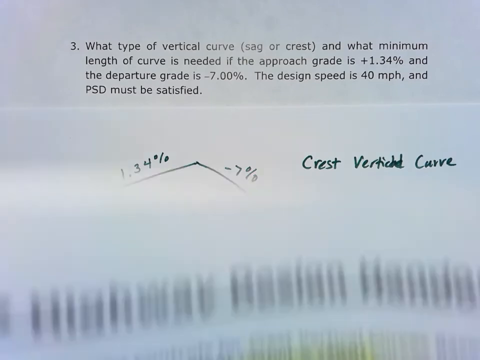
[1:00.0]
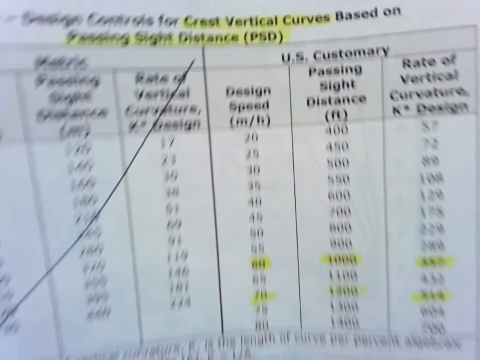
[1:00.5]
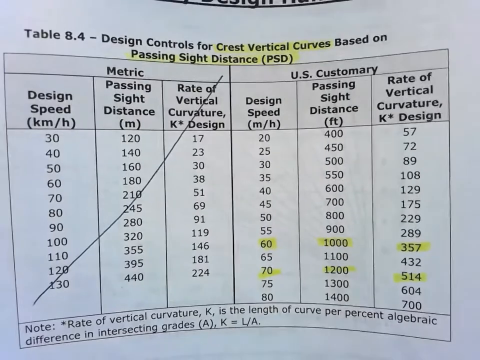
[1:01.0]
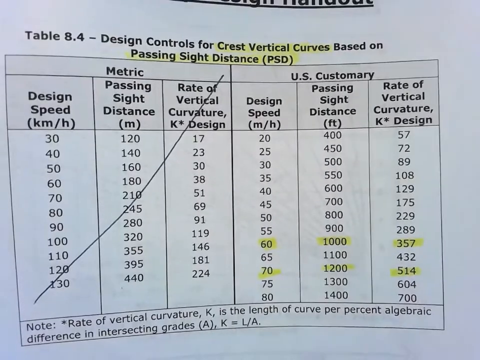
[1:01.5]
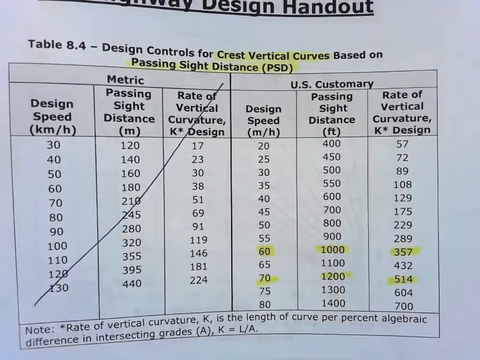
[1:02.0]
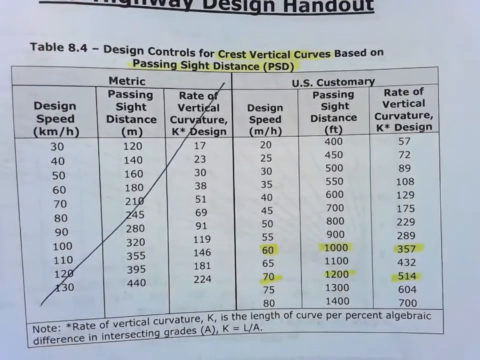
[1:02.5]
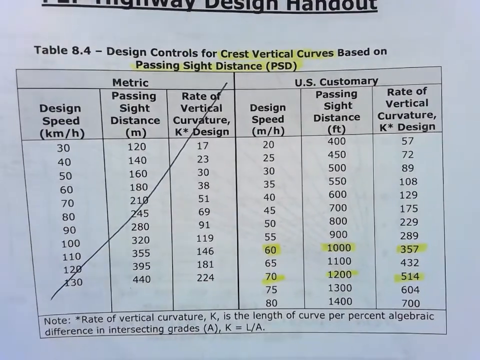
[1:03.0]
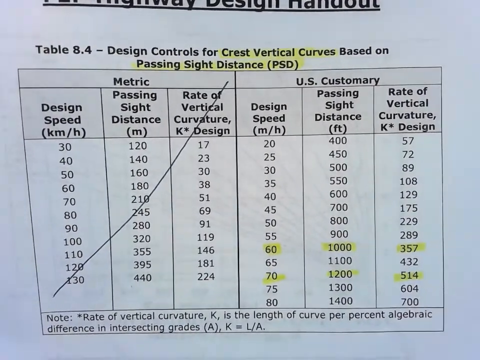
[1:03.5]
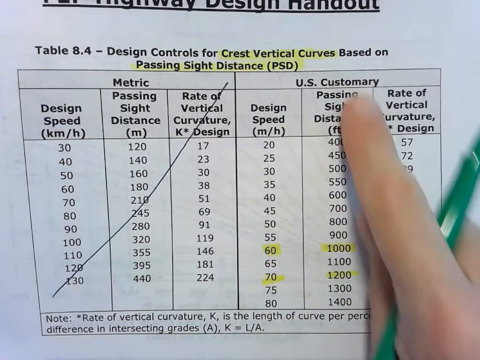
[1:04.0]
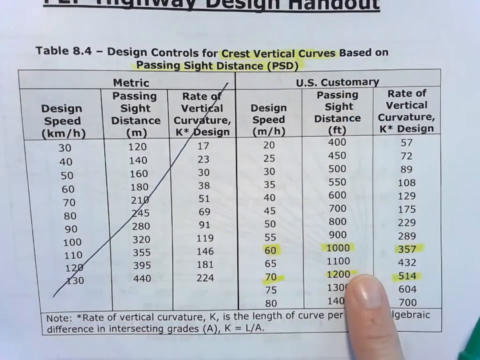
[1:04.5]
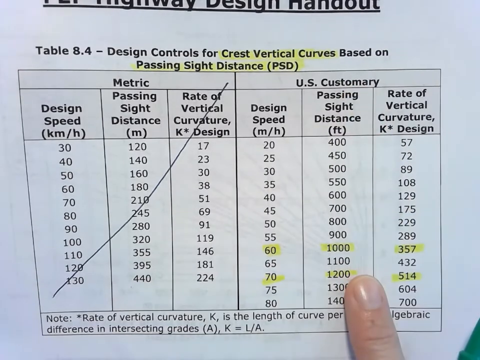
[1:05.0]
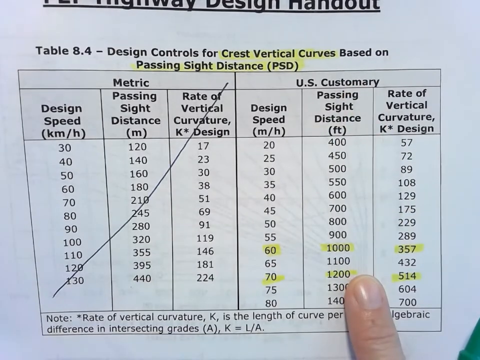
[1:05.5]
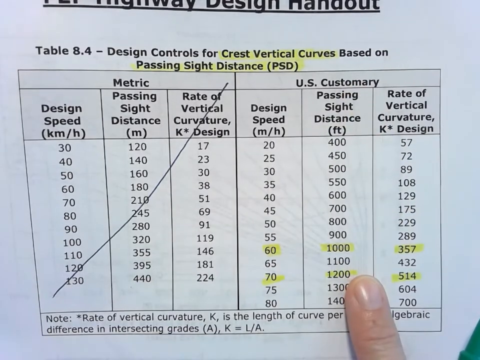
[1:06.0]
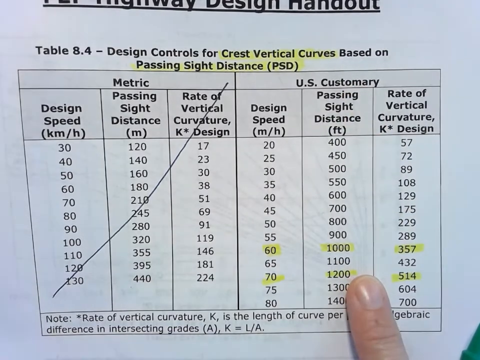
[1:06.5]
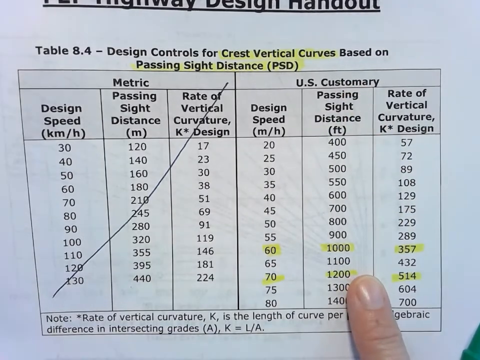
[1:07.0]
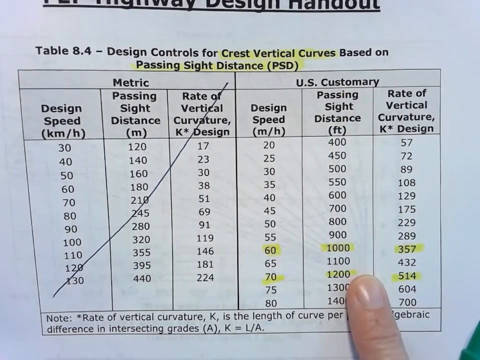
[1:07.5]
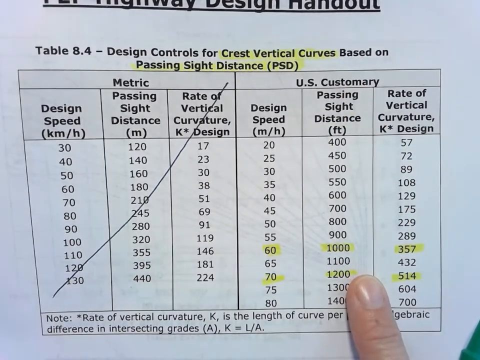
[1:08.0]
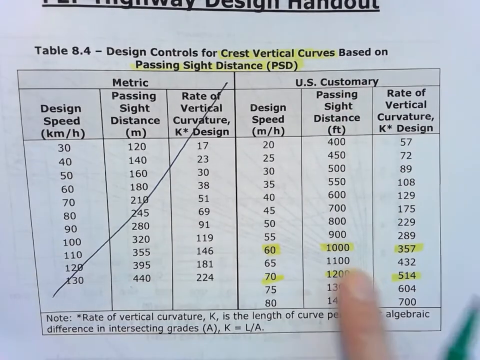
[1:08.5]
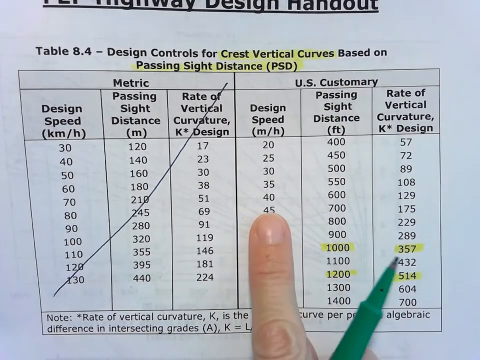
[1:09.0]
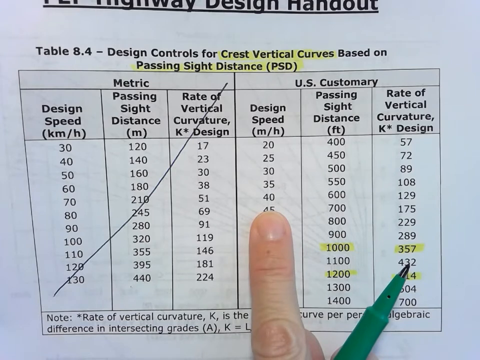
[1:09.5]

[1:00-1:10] The workings for the question are shown: two green lines, with 1.34% on the left line and -7% on the right line, joined at a vertex, and the words "Crest Vertical Curve" written to the right, all placed underneath the question at the top of the page. The video then jumps to a piece of paper with tables, where the left side of the page, headed "metric", is struck out and the right side says "US Customary". The title of the table is "Design Controls for Crest Vertical Curves Based on Passing Sight Distance, PSD"; it is a table for looking up a value to answer the question. Some values on the page are highlighted in yellow, such as the design speeds 60 and 70 and their corresponding passing sight distance and rate of vertical curvature. A person's index finger points out a number on the table.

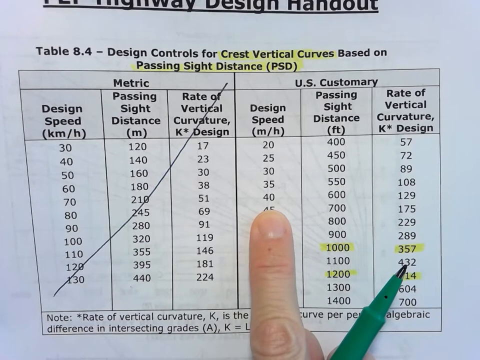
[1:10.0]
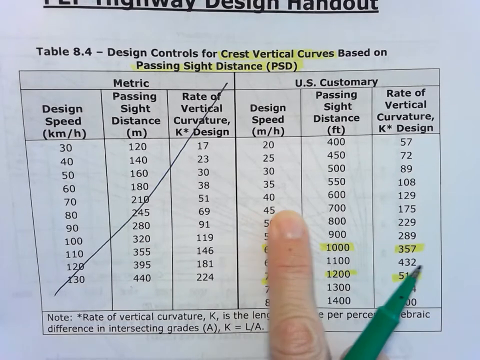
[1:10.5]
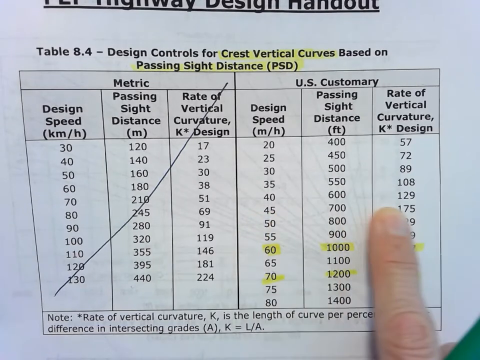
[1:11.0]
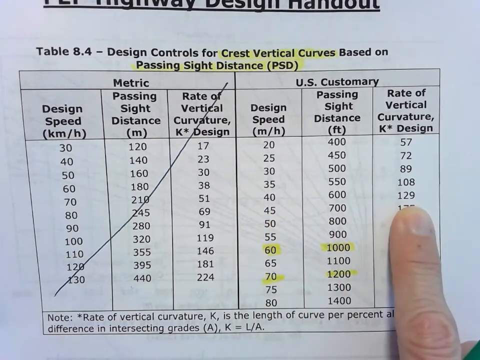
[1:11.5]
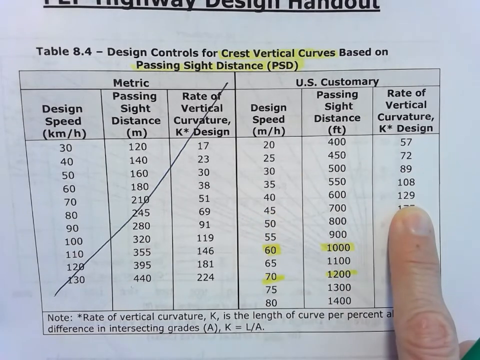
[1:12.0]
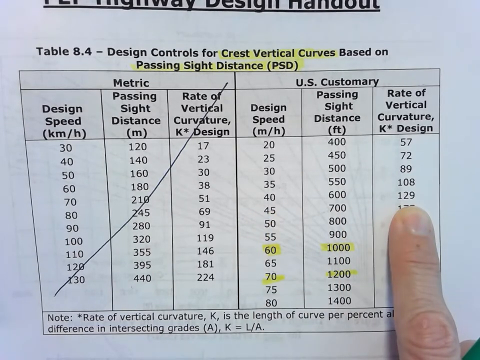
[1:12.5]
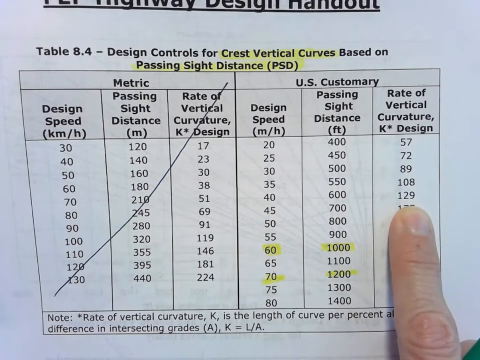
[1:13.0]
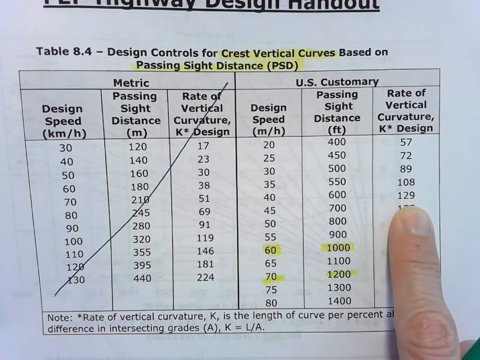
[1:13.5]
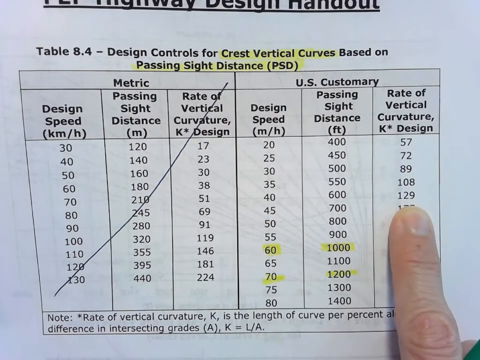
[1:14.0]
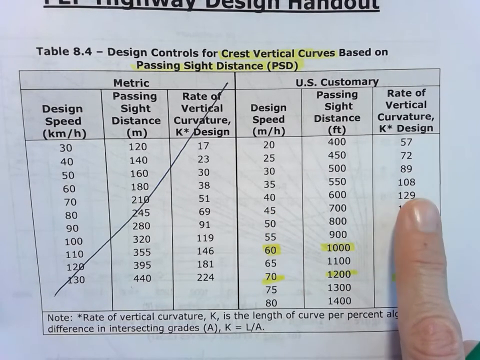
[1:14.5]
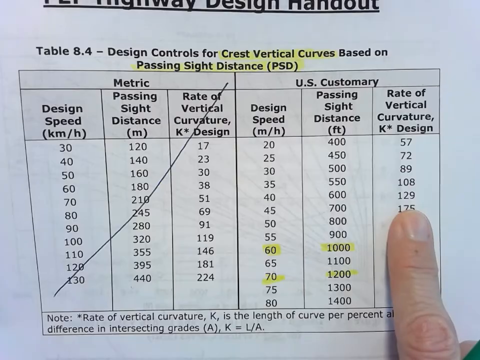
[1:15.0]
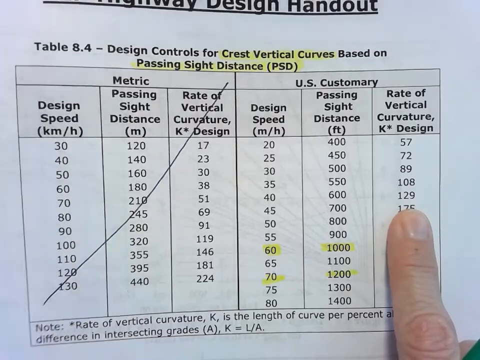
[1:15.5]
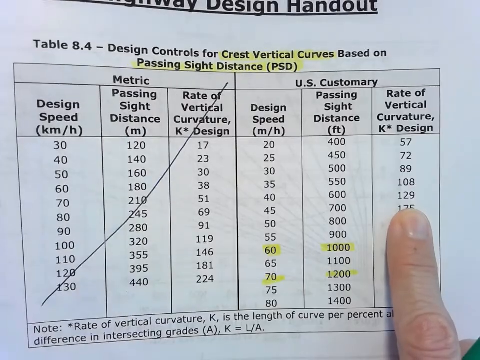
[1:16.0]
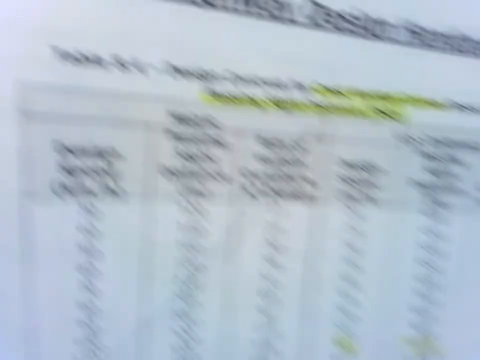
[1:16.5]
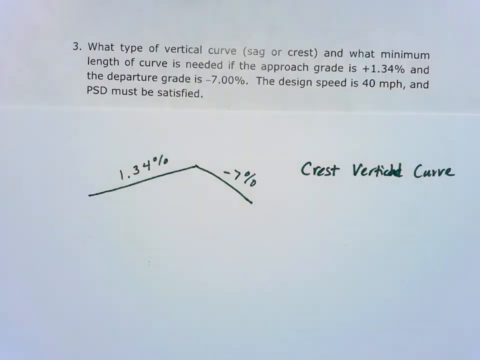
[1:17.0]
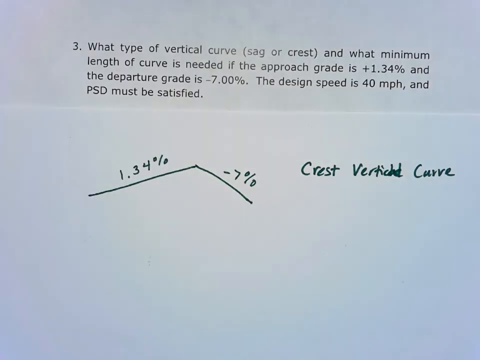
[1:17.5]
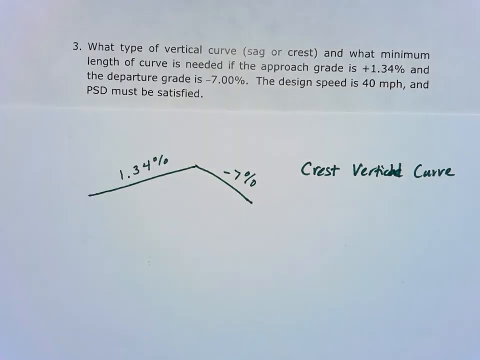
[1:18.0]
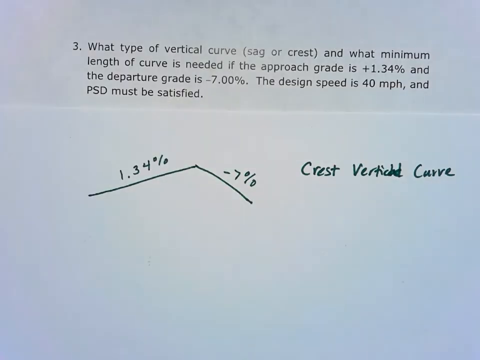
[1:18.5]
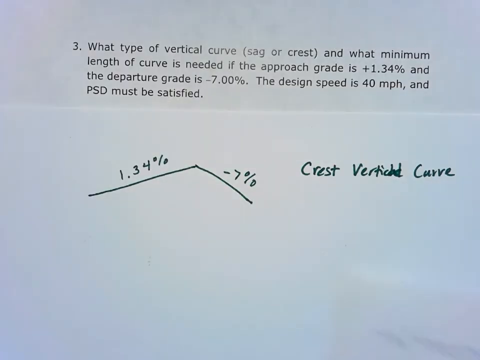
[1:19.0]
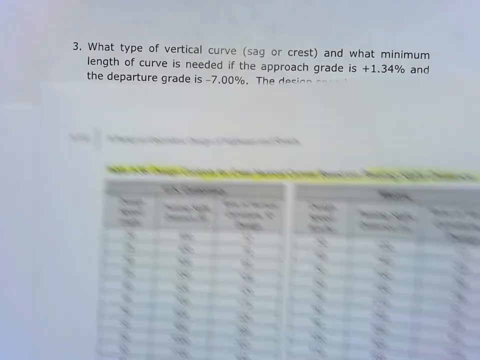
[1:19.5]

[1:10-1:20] A piece of paper shows a black printed table, with a person's index finger pointing at numbers on the right side. The left side of the table, under the title "metric", is struck out, and the finger looks at numbers under the side titled "US customary". The table is named "design controls for crest vertical curves based on passing sight distance". The values are being looked up to answer the question on the question sheet. Once the value is found, the video goes back to the sheet with the question momentarily.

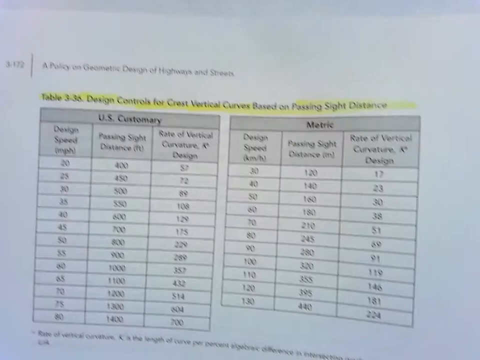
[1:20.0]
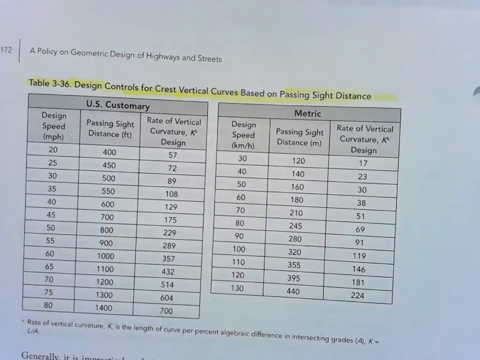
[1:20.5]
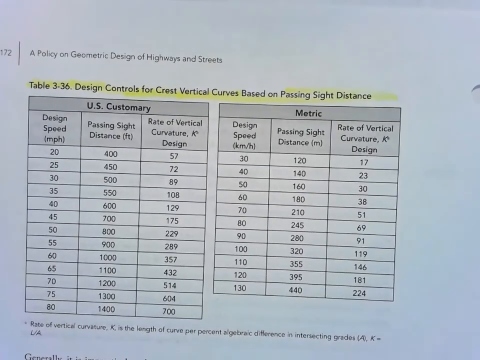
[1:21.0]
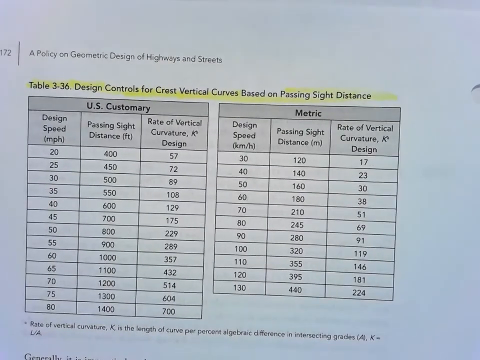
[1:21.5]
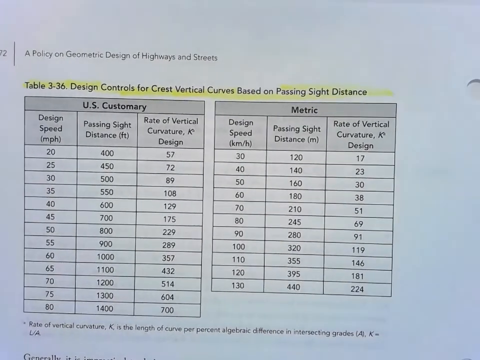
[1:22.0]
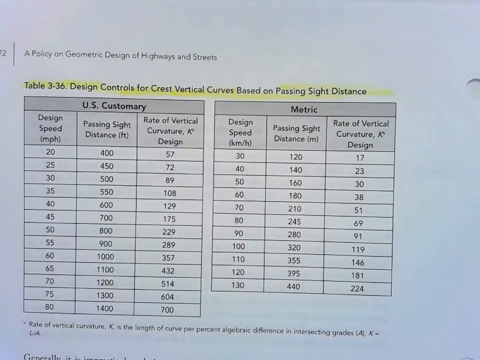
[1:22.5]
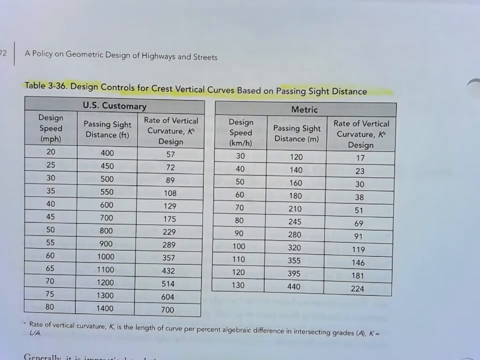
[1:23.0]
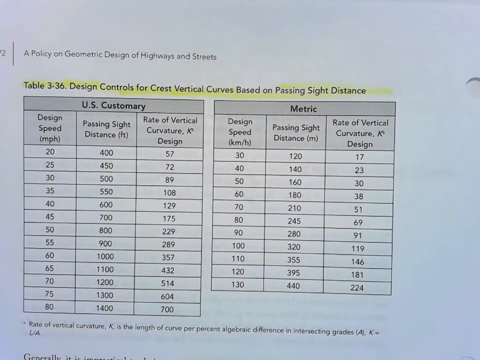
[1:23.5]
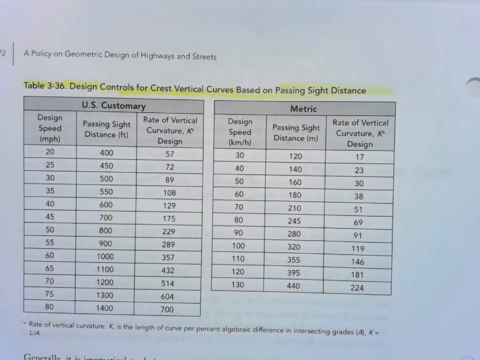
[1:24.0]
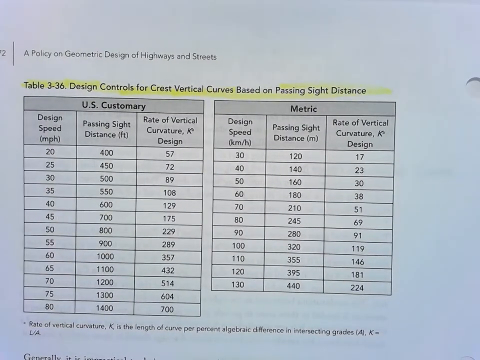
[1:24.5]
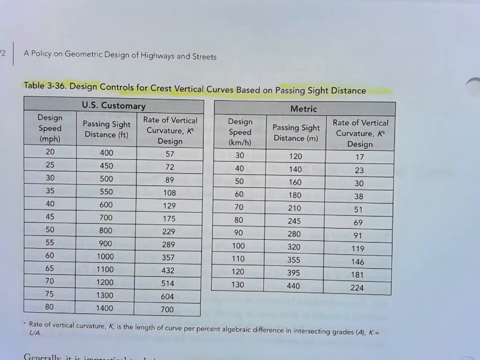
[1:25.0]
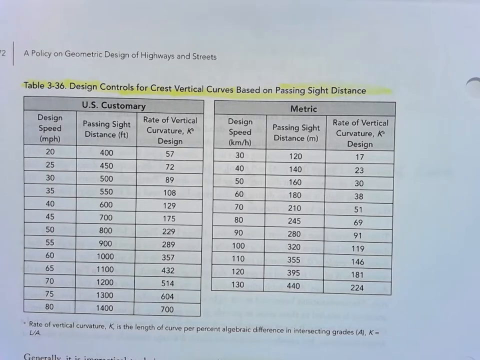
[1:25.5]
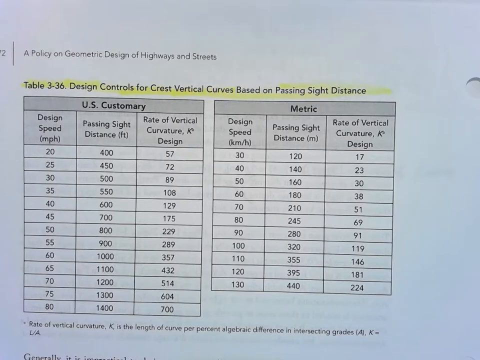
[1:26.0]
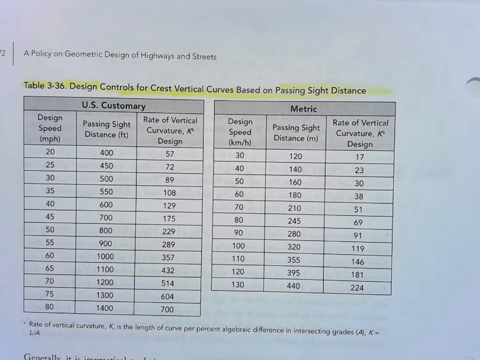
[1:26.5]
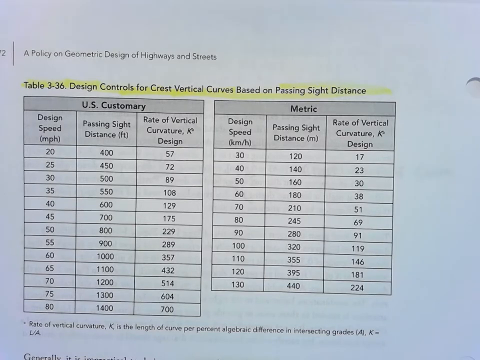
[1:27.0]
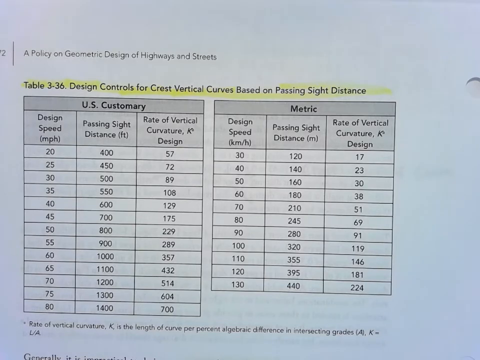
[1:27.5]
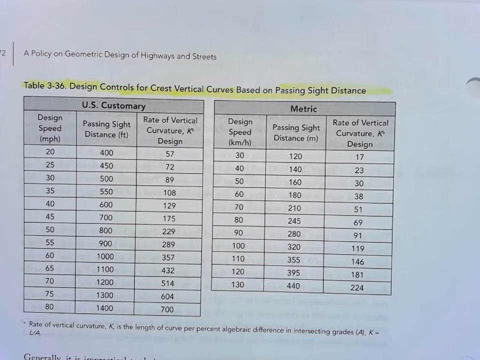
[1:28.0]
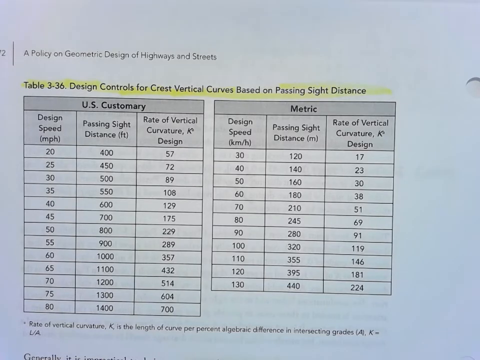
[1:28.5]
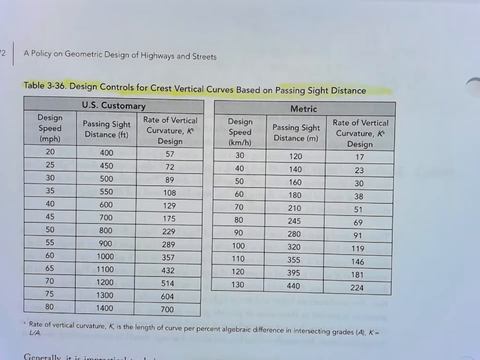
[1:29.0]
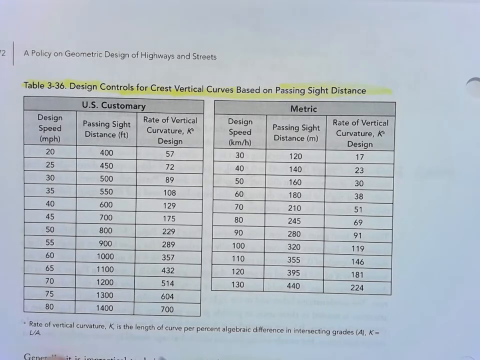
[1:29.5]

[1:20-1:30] The view moves to another piece of paper with two tables side by side; one says "US customary" at the top and on the right side is "metric". The title of the two tables is "design controls for crest vertical curves based on passing sight distance". It looks like two tables with the same information are being referred to, maybe to double-check the numbers for design speed, passing sight distance and rate of vertical curvature, which appear to be identical. The title at the top of the table is highlighted in yellow, and the text is black on a white page that seems to be taken from a book titled A Policy on Geometric Design of Highways and Streets. On the right side of the page there is a circular perforation like a punch hole, and the page number, 3-172, is just about visible at the top left of the screen.